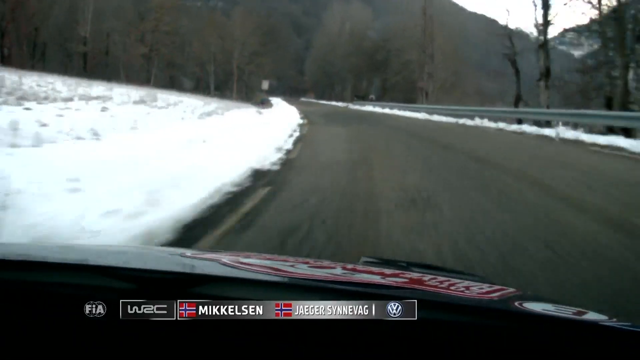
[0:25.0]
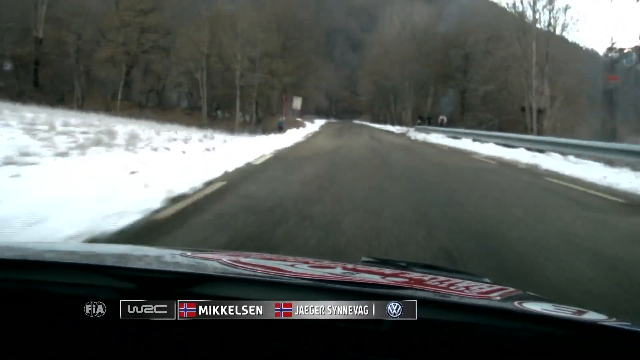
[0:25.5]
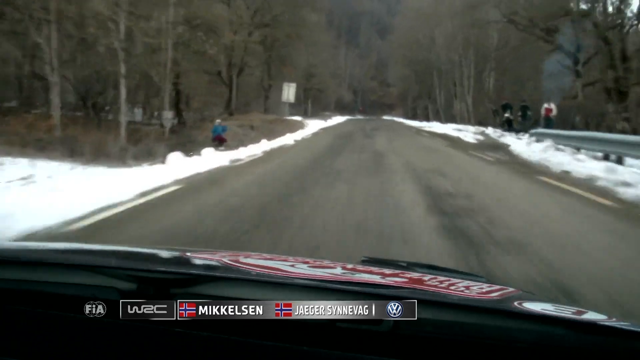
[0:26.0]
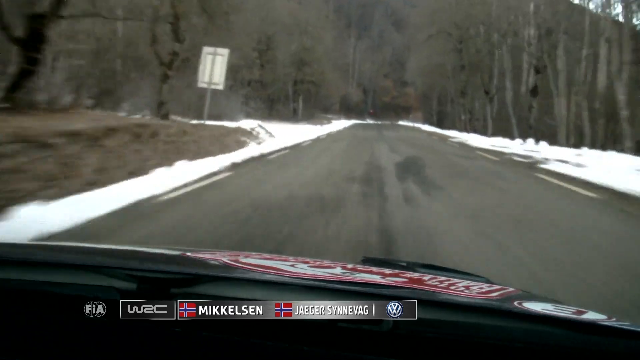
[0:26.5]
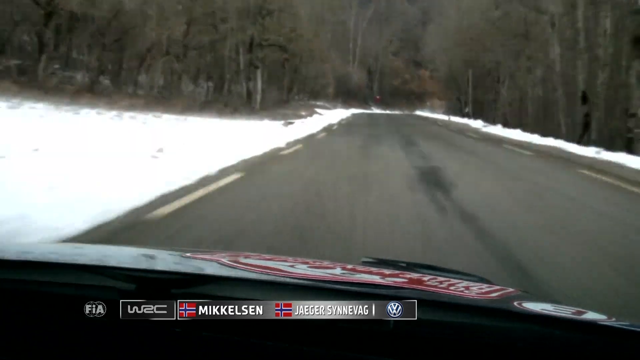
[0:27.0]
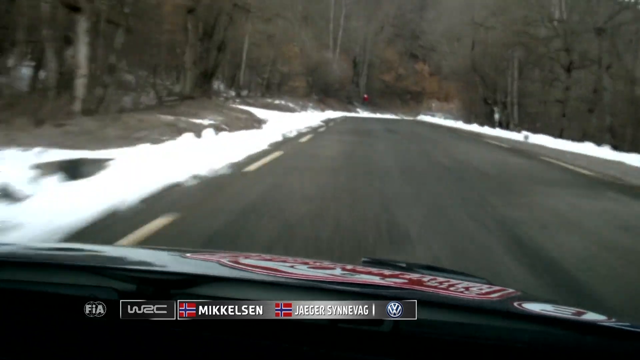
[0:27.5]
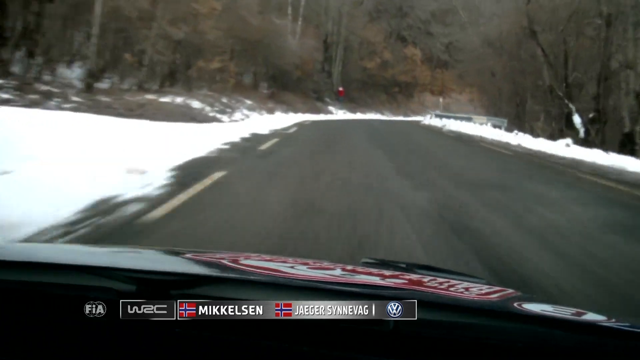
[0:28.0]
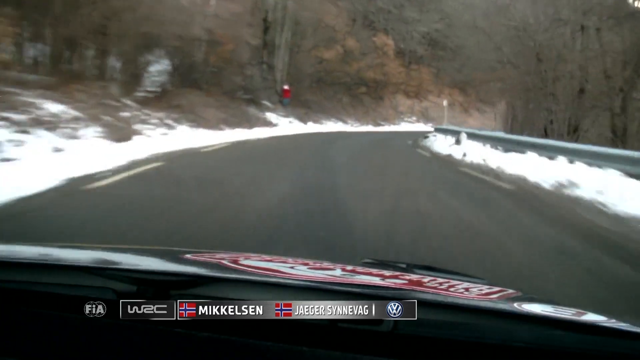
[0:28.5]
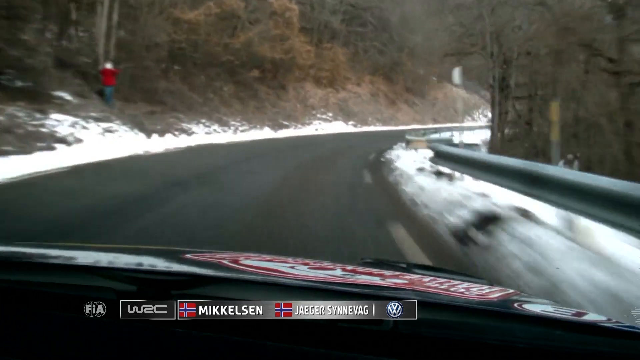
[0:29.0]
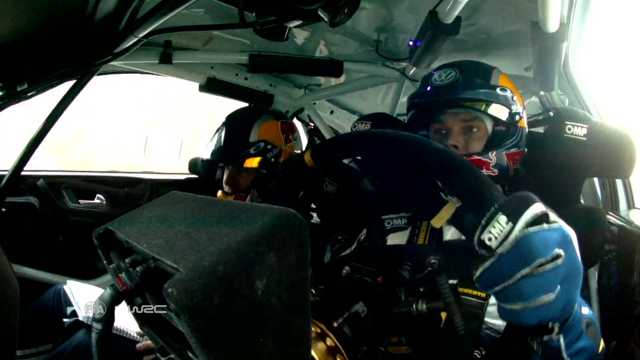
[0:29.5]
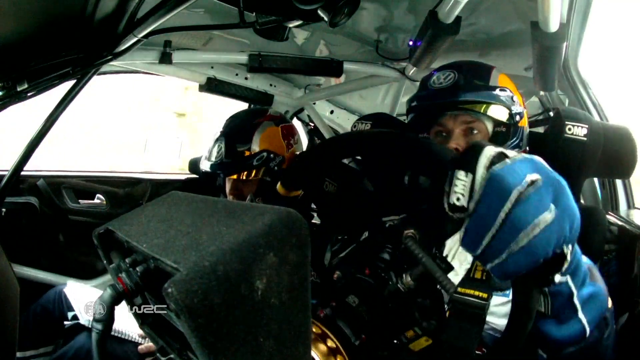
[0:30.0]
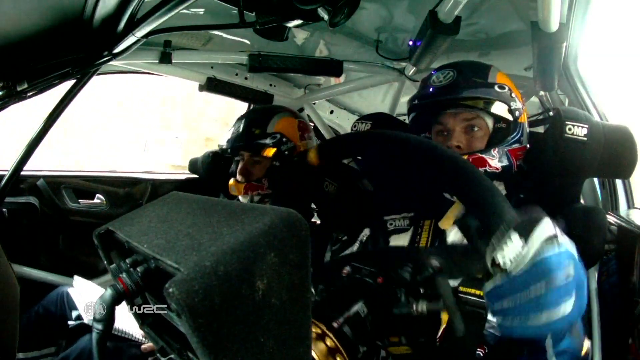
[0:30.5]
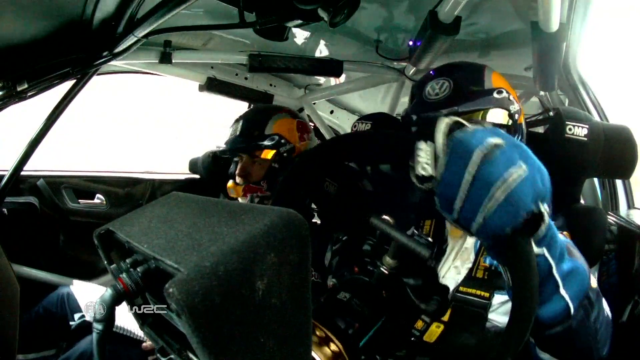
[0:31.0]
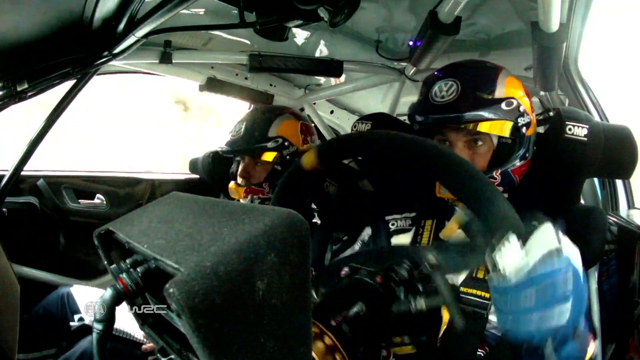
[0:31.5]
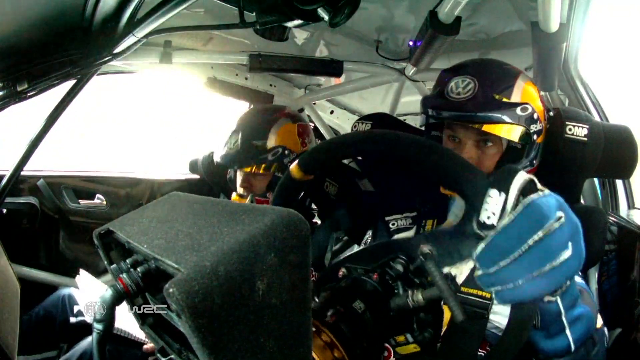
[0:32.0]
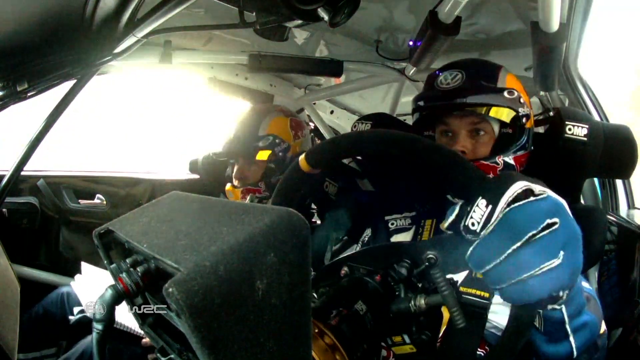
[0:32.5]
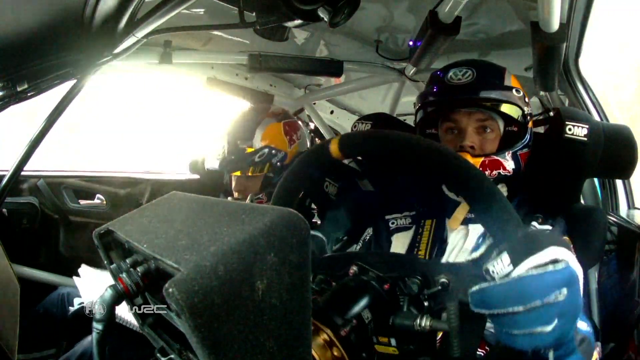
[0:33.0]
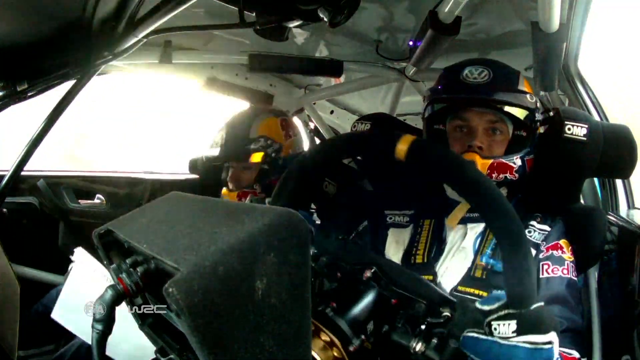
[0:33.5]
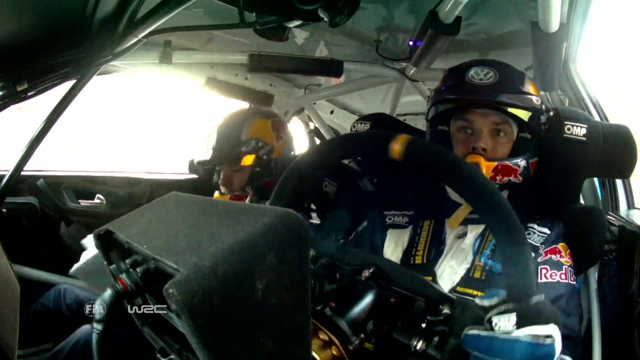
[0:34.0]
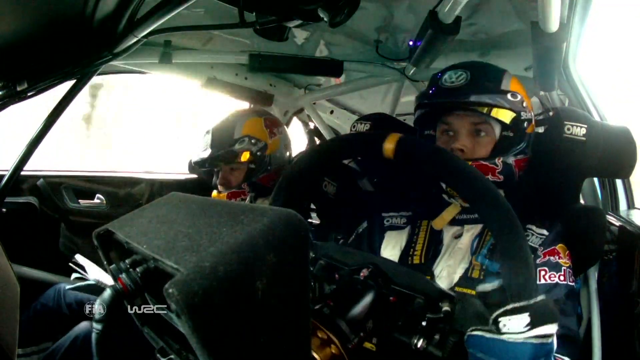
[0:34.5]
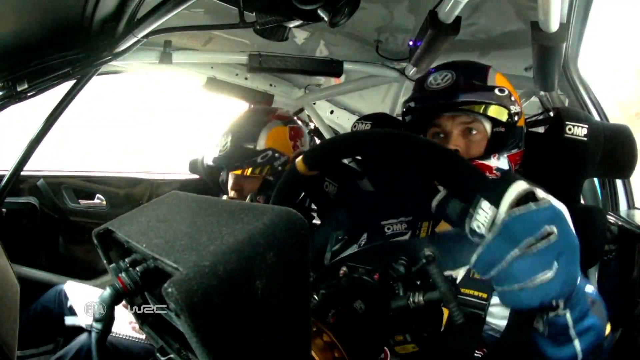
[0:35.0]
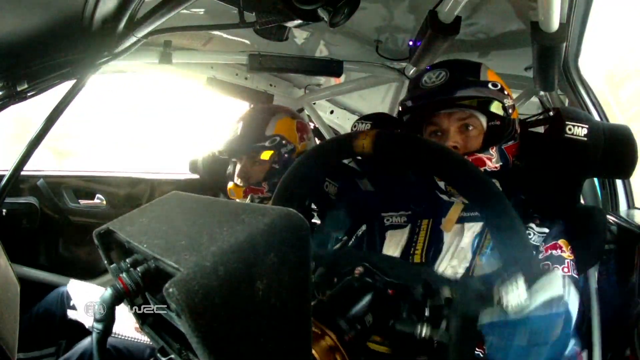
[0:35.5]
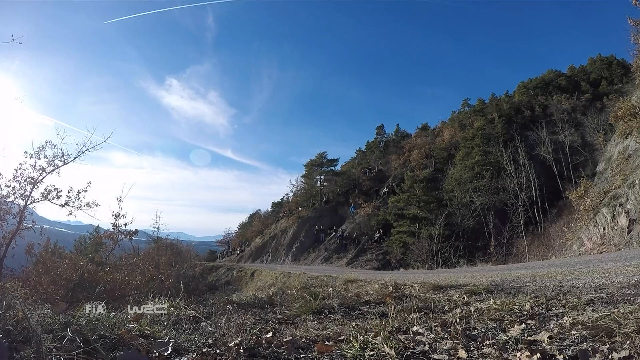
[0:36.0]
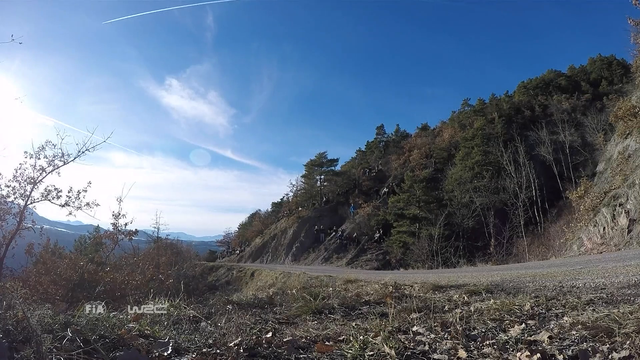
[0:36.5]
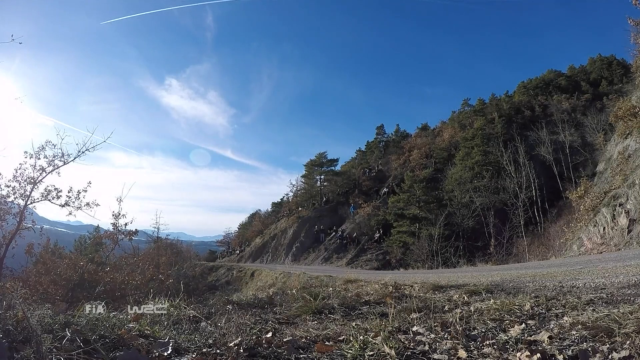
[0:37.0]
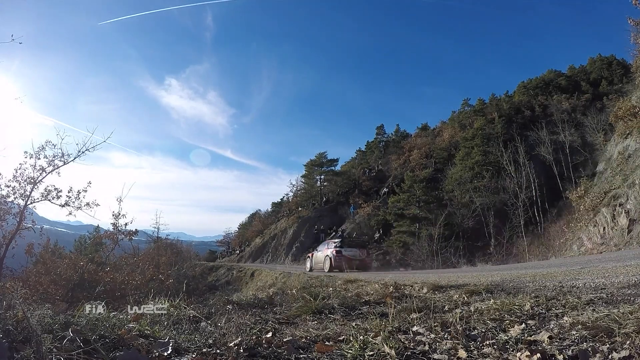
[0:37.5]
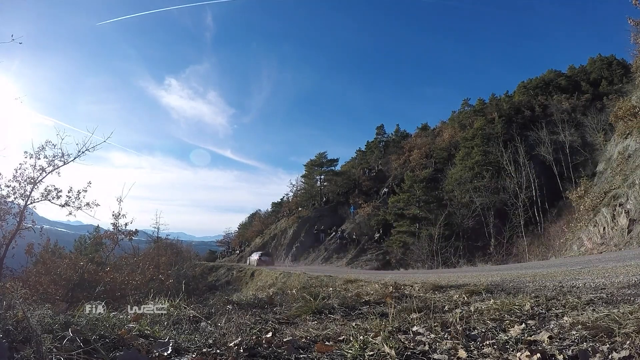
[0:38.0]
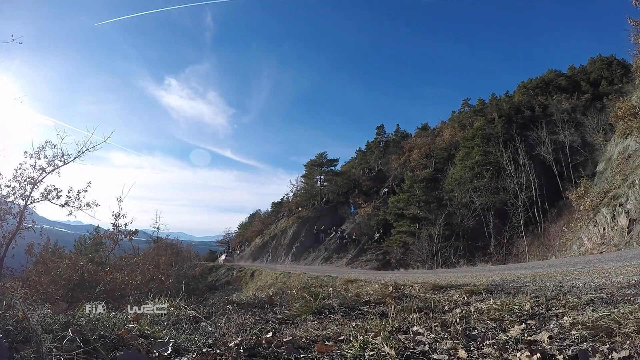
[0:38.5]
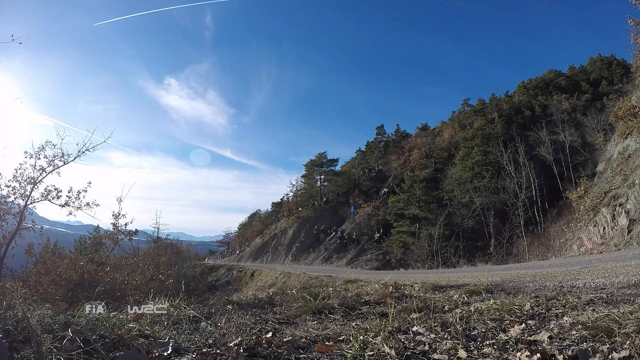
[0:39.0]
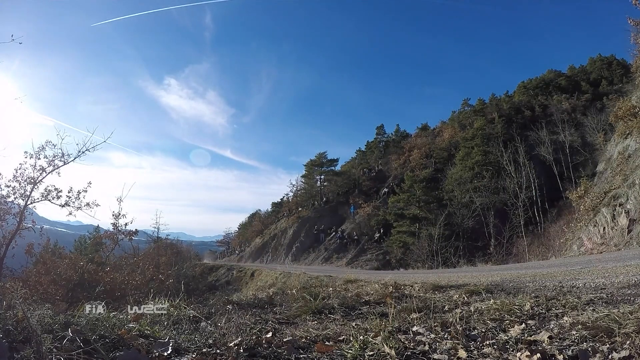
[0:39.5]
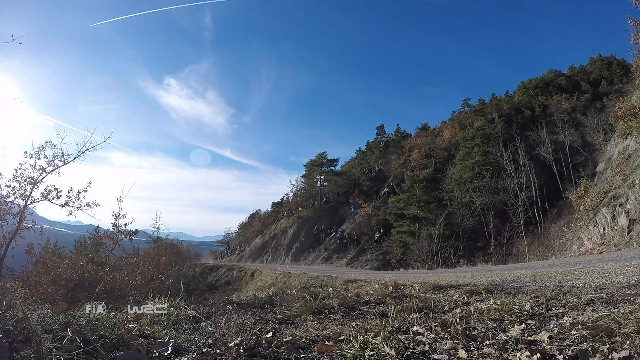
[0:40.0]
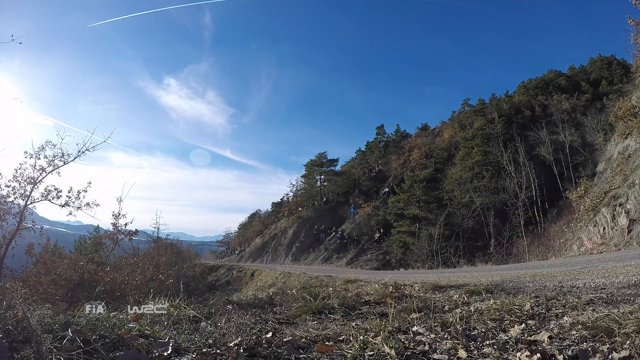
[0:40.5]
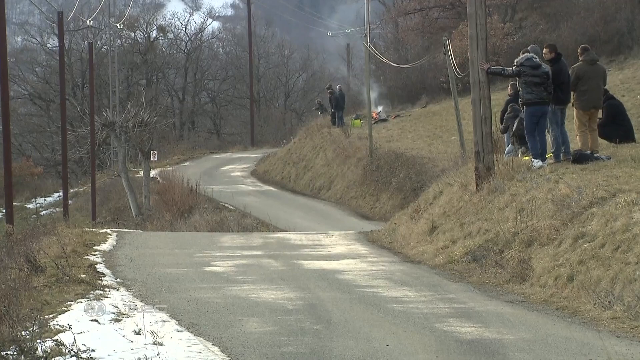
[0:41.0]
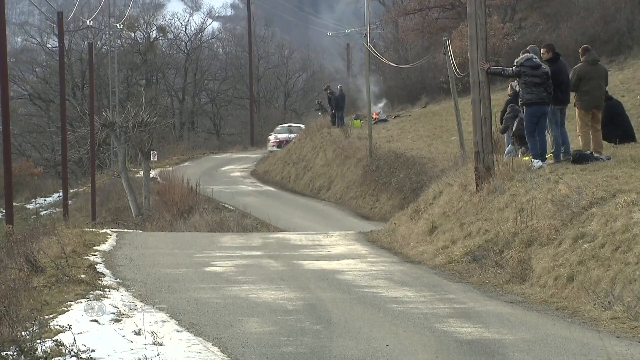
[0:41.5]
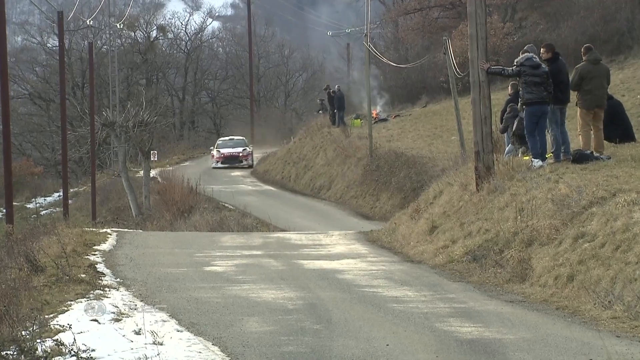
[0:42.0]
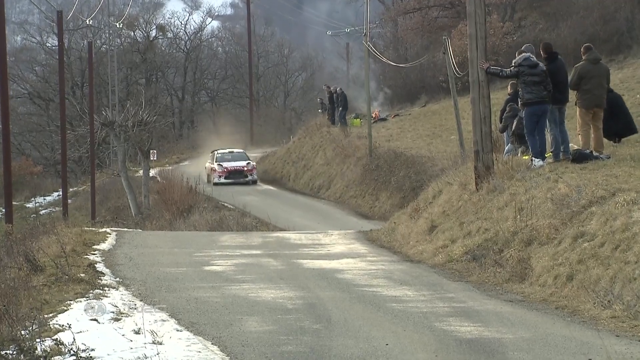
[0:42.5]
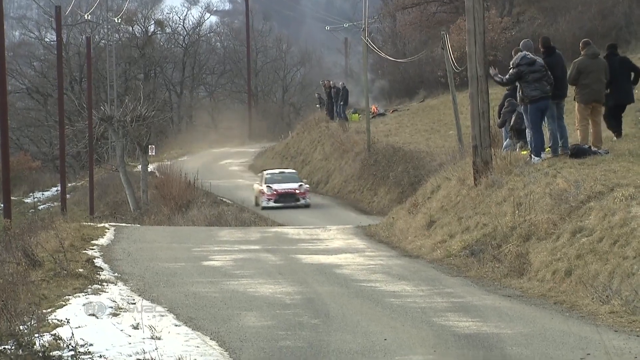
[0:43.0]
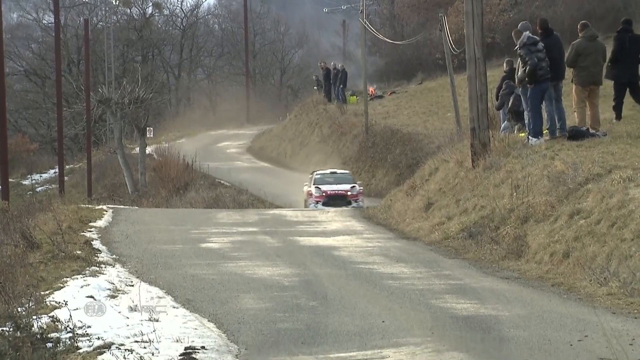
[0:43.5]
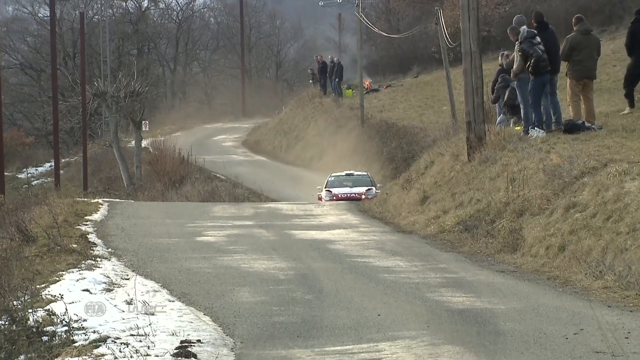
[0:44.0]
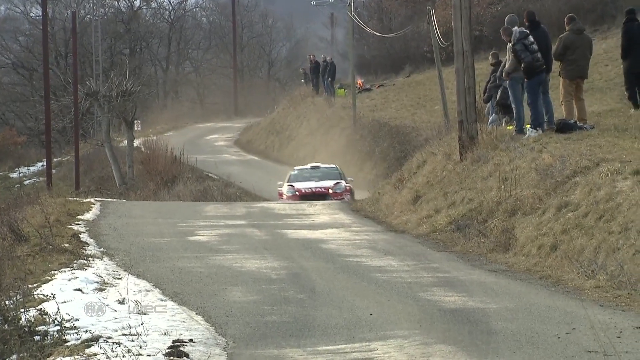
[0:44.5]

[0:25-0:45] A dash cam view shows someone driving a car outdoors, with a lot of snow on the left and right sides of the road. The left side appears to be a forested area, while the right side appears to have something like a handle bar area that kind of blocks the pathway. At the very bottom of the screen are two names with blue and red flags. As the car drives on, a couple of people stand on the right and left sides of the road, apparently viewers of the event. The road curves to the right, and a close-up shot shows the apparent drivers inside the vehicle: two people in the front seats, both wearing black, yellow and red helmets, with what is possibly a Red Bull logo on the front of a helmet. Both have a white skin tone and look forward at the road. The steering wheel is black. The right side window is very bright, showing that the sun is out. The driver turns the wheel, apparently trying to keep control of the vehicle. A different shot looks down on the vehicle as it passes along the road, with several people on top of a hill watching the cars go by. Another shot shows the vehicle coming toward the camera, with several people on the hills on the right watching it pass, mostly in warmer clothing such as black jackets and blue pants.